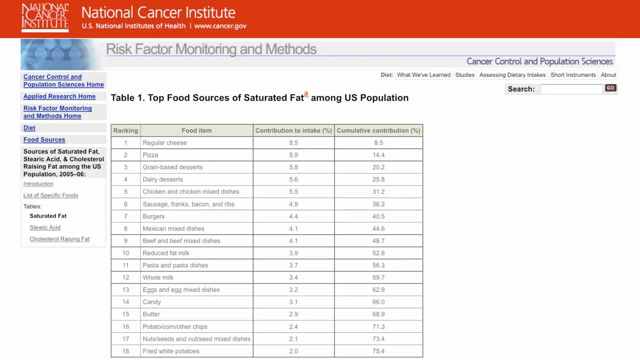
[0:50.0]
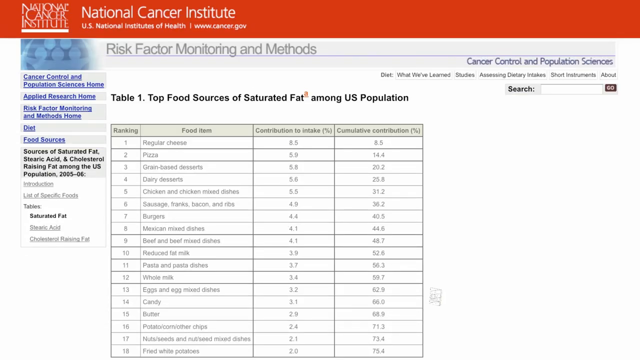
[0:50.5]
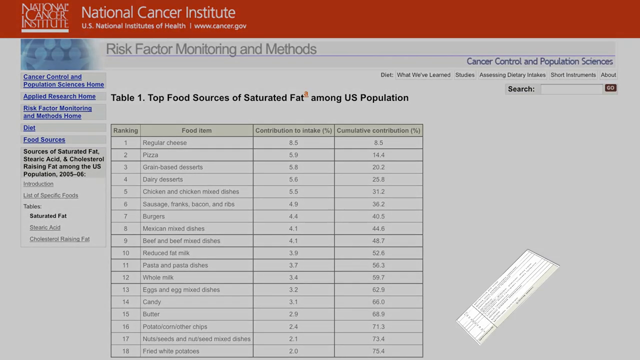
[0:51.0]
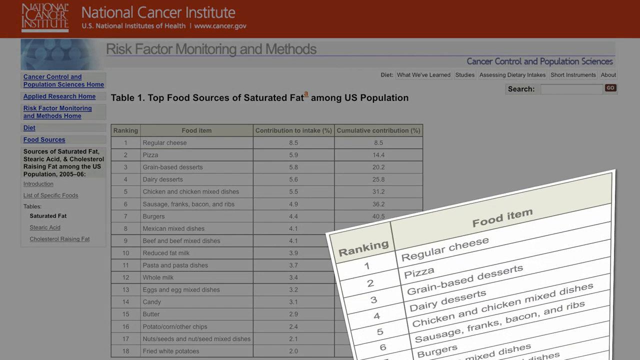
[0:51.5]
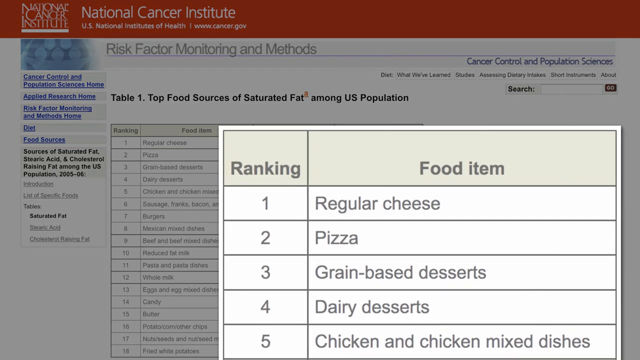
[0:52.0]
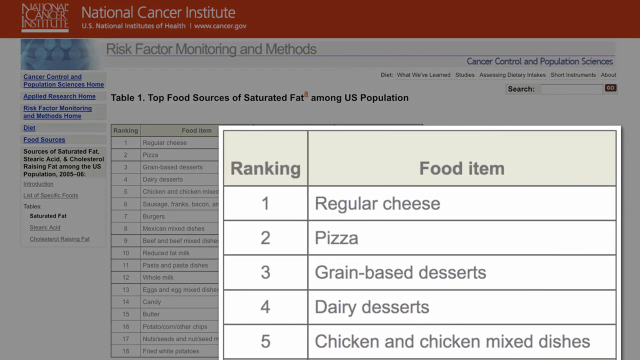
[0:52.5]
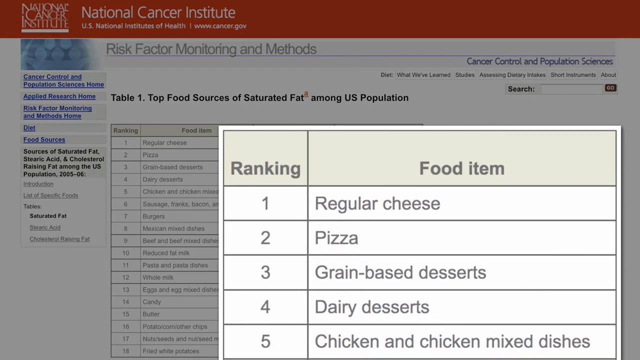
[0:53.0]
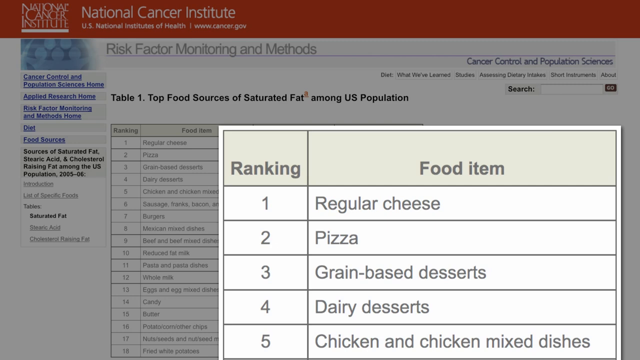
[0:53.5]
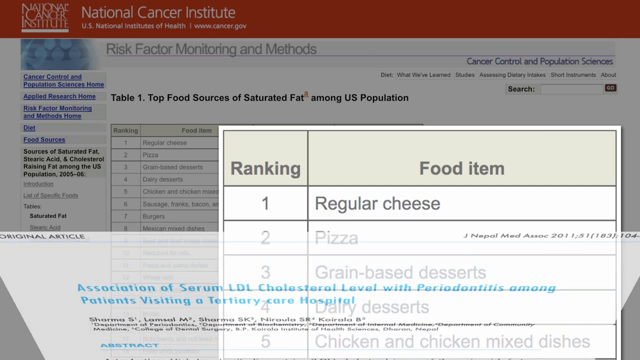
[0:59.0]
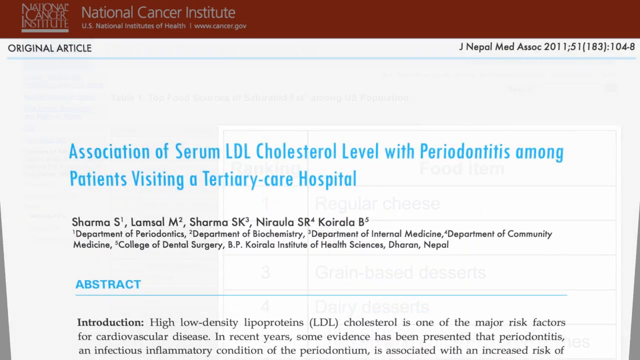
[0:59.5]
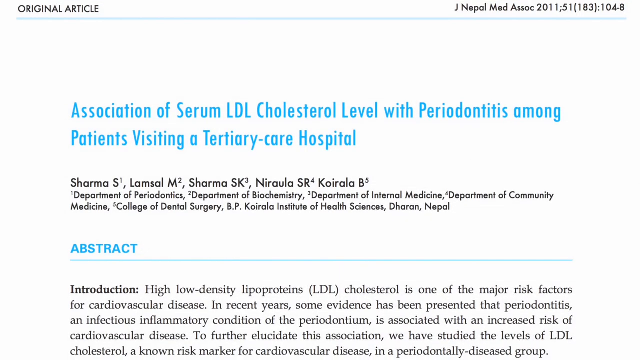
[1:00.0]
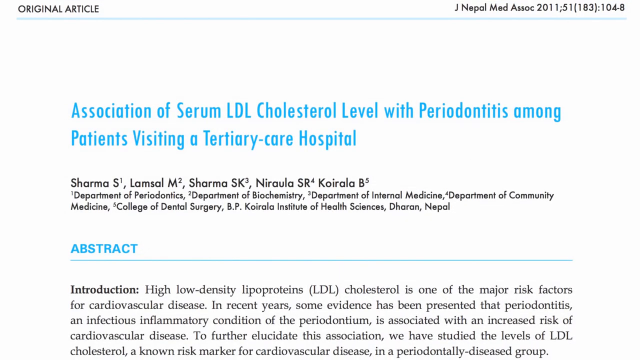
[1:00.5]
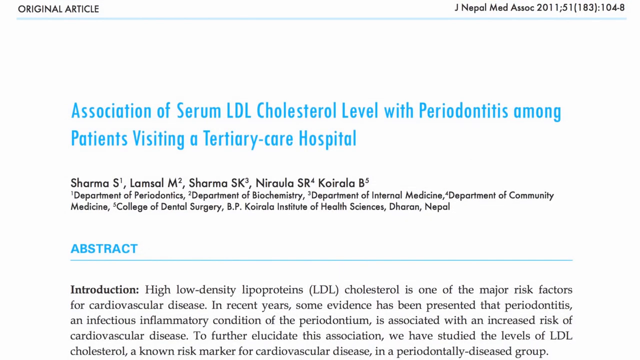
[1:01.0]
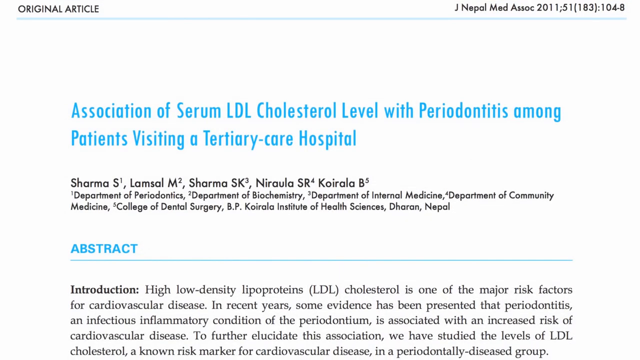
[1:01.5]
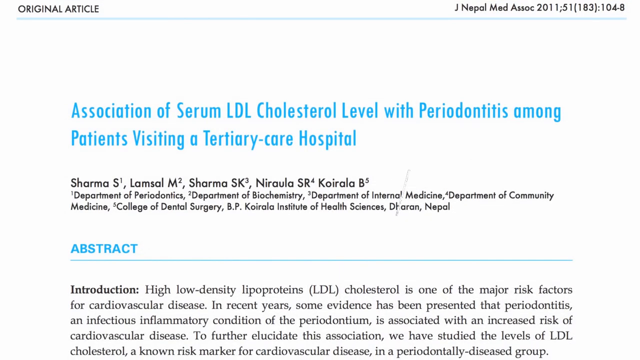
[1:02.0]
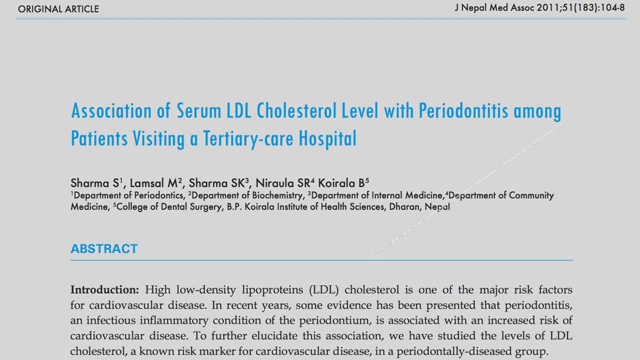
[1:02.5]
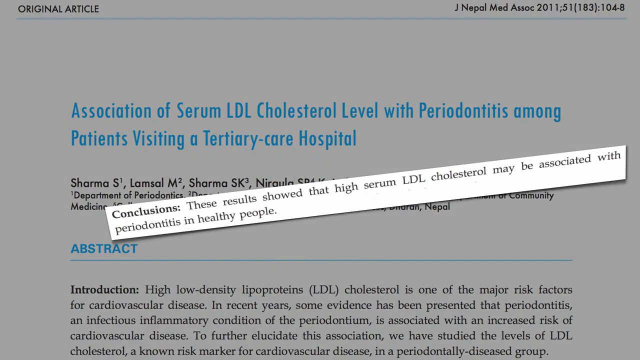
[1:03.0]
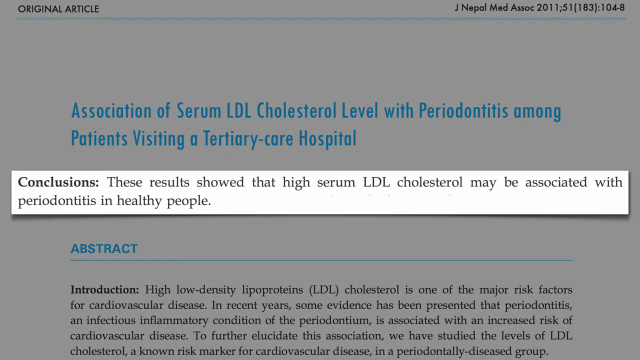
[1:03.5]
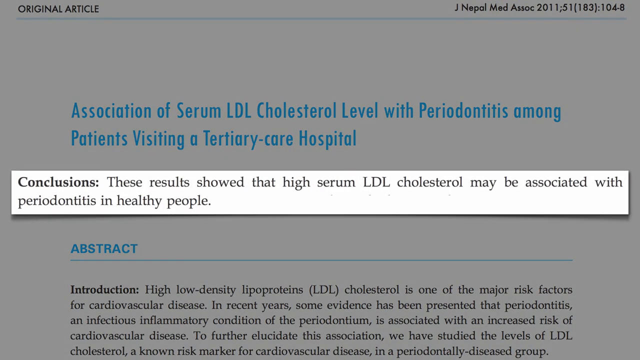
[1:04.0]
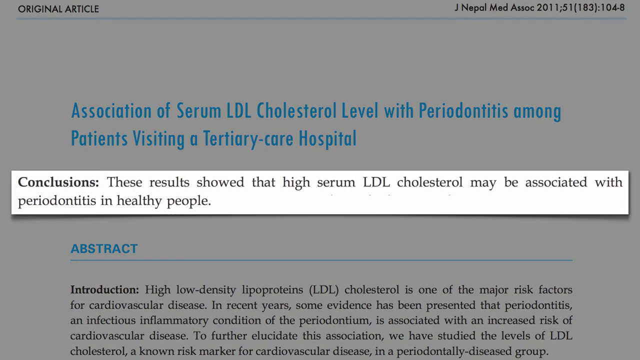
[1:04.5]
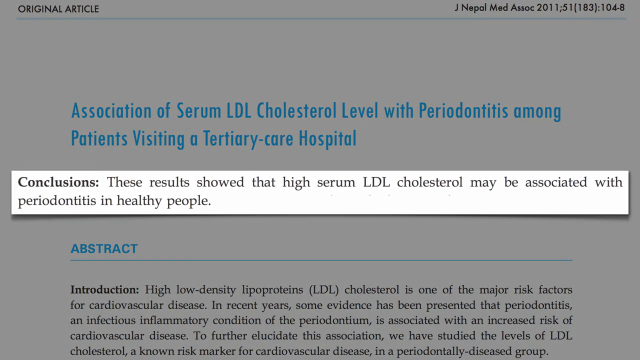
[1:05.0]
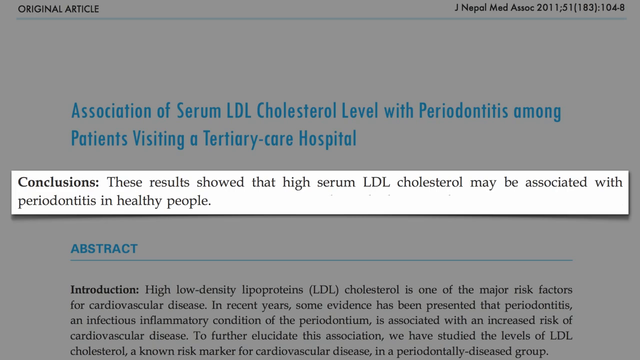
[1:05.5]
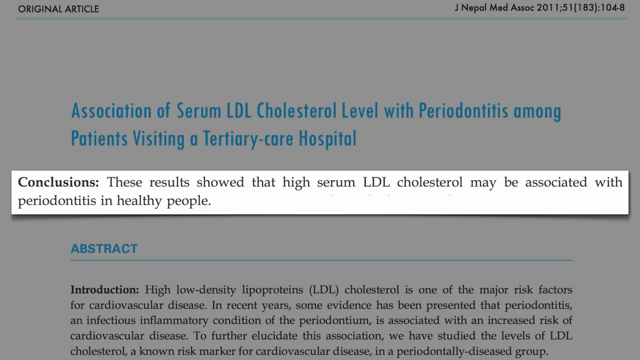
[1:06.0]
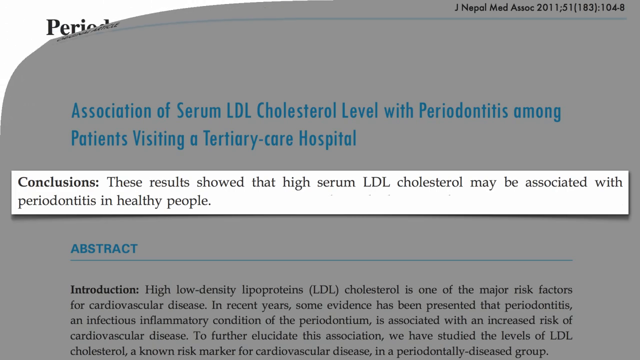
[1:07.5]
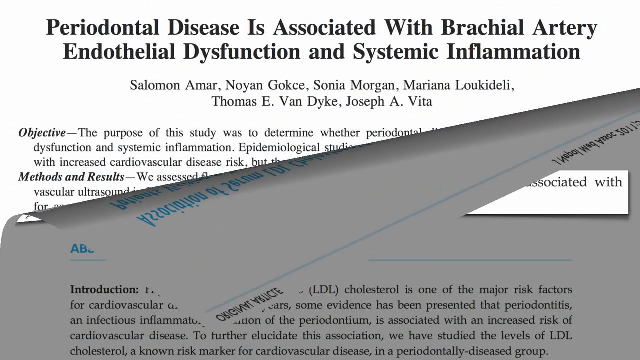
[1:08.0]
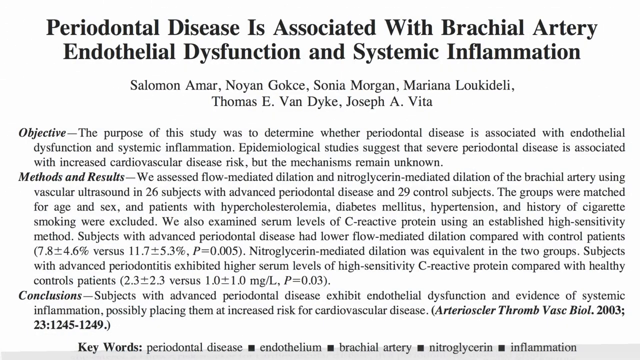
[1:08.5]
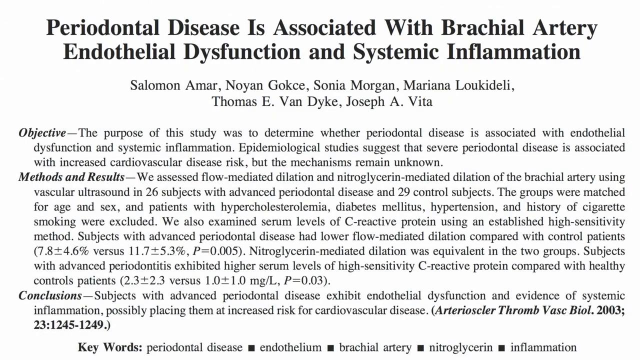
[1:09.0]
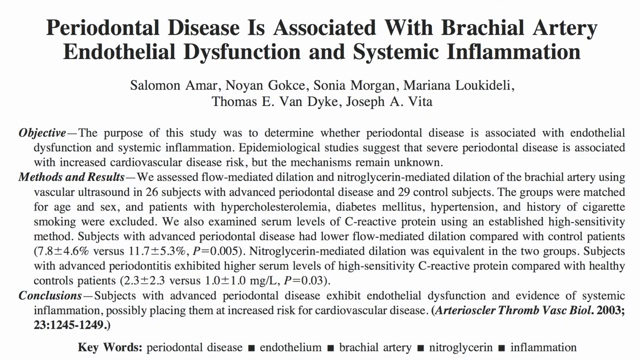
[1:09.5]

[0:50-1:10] A graph appears that is hard to make out; it is a table titled "Top food sources of saturated fat among U.S. population." It also reads "risk factor monitoring and methods" and "cancer control and population sciences," but the table is small and hard to read. Something is then brought up reading "food item," listing regular cheese, pizza as number two, grain-based desserts as number three, and dairy desserts, with number four being highlighted on the graph. Next, a title in blue lettering appears about the association of serum LDL cholesterol levels with periodontitis among patients visiting a tertiary care hospital. There is an abstract in blue, including an introduction about low-density lipoproteins, stating that LDL cholesterol is one of the major risk factors. A white label pops up with conclusions that high serum LDL cholesterol may be associated with periodontitis in healthy people.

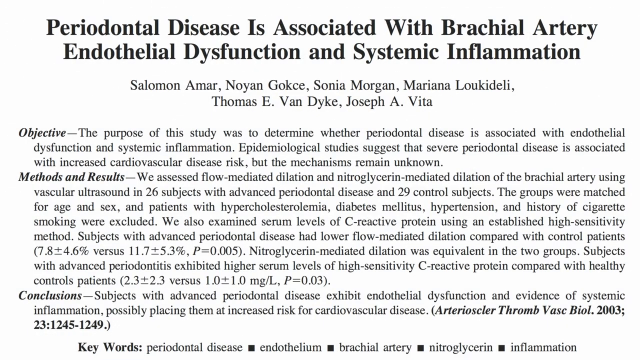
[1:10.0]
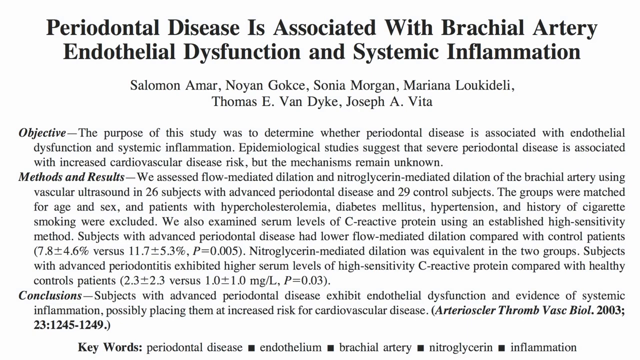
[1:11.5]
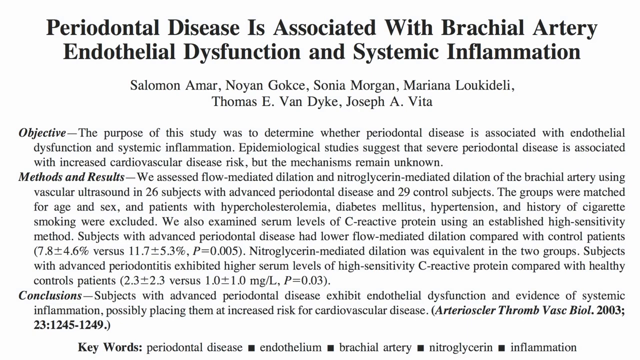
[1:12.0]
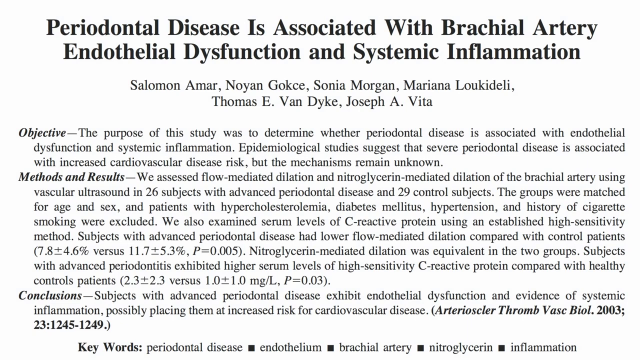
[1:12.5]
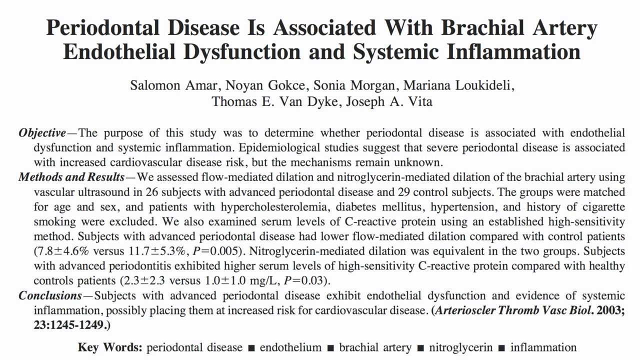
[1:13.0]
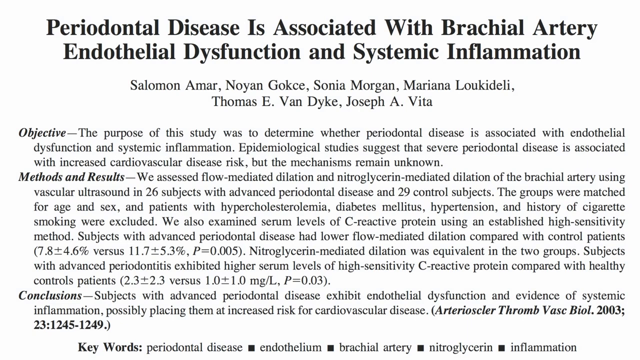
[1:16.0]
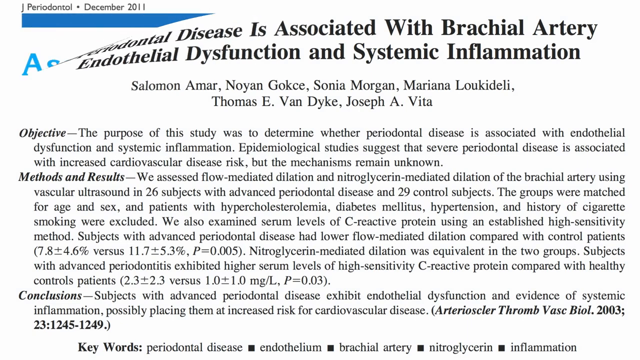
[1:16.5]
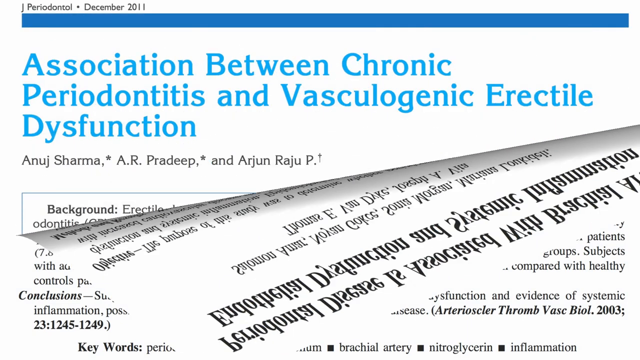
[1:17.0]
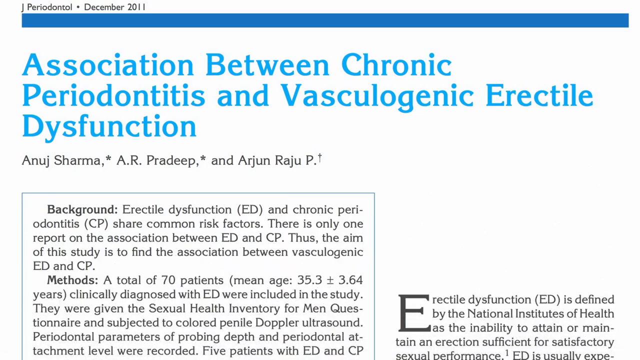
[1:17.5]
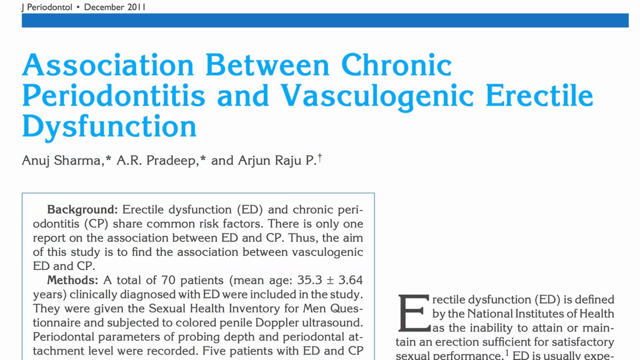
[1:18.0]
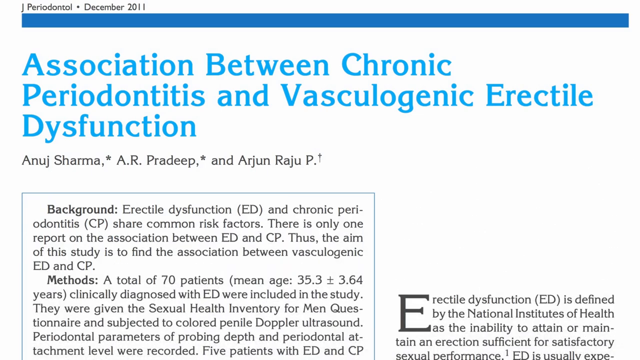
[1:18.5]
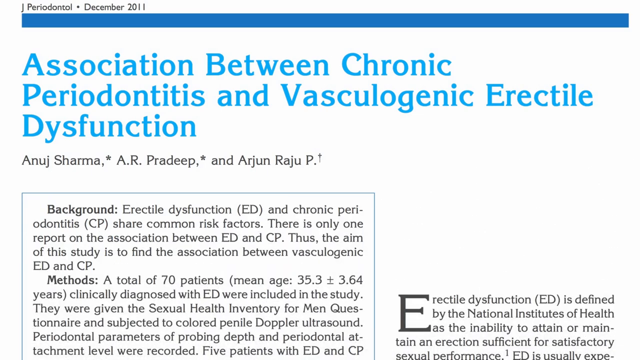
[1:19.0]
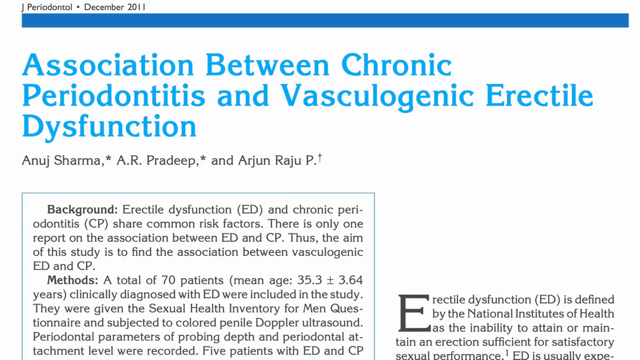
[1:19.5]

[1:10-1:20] Another article appears, with an objective stating that the purpose of the study is to determine whether periodontal disease is associated with endothelial dysfunction, followed by methods and results sections. This article is about periodontal disease associated with bronchial artery dysfunction and systemic inflammation. Names of people associated with the article are shown, including Thomas E. Van Dyke. Then blue writing appears: "association between chronic periodontitis and vascular genic erectile dysfunction," with background and methods sections, and there is a focus on the erectile dysfunction part.